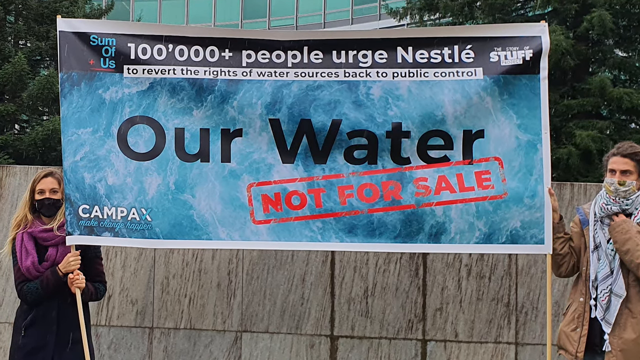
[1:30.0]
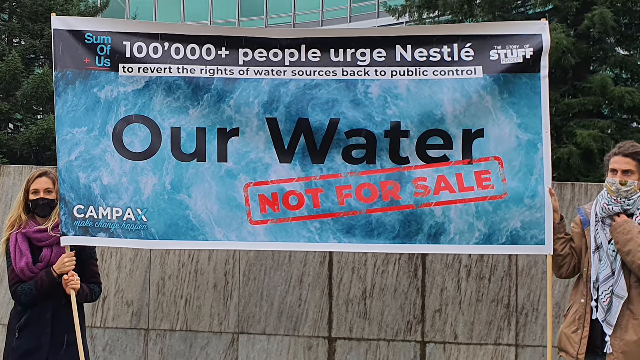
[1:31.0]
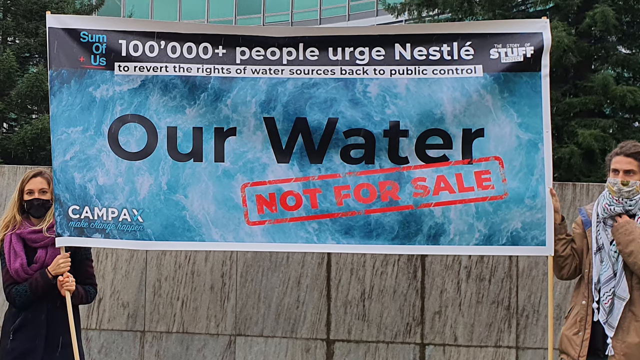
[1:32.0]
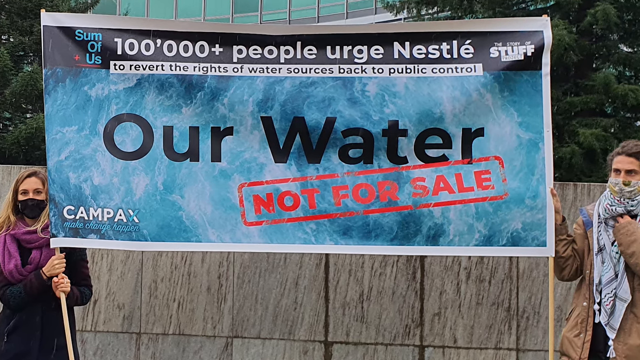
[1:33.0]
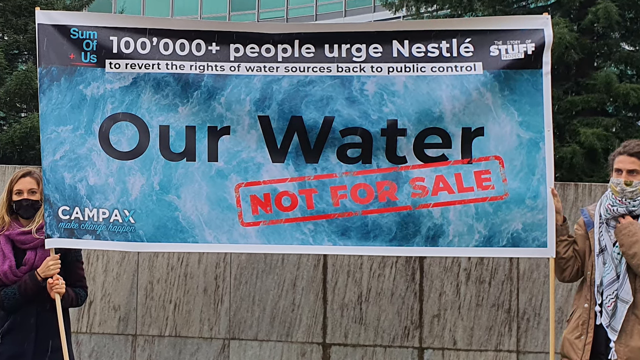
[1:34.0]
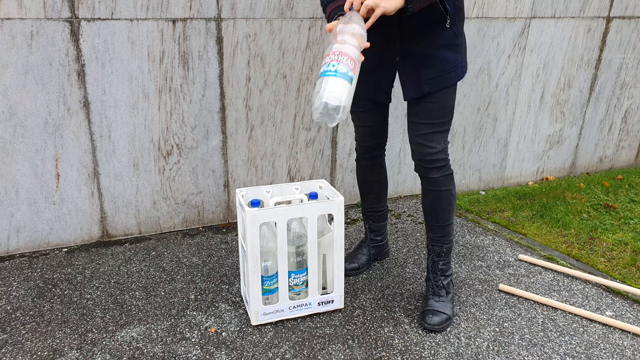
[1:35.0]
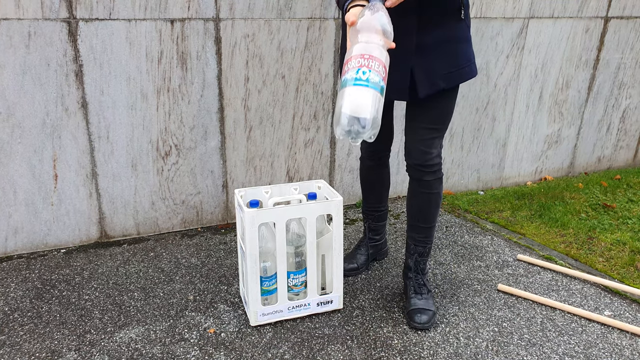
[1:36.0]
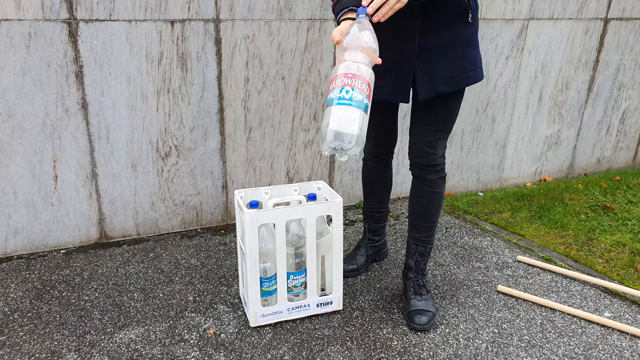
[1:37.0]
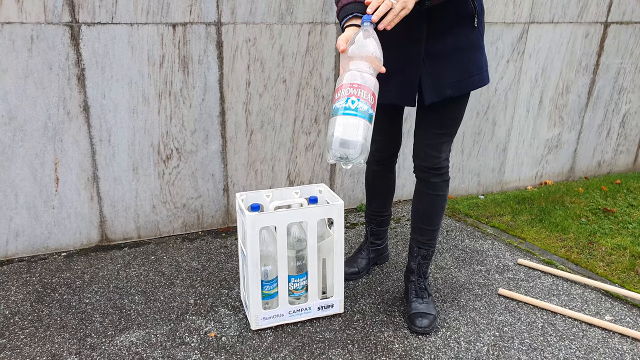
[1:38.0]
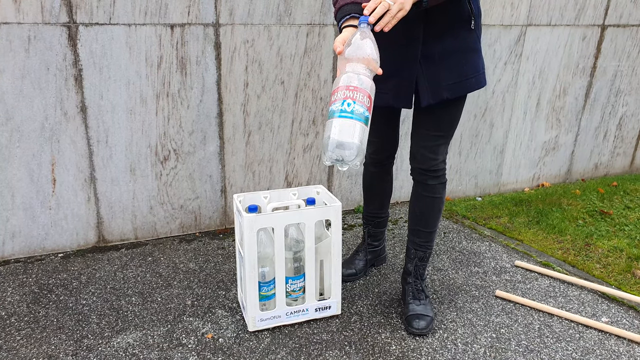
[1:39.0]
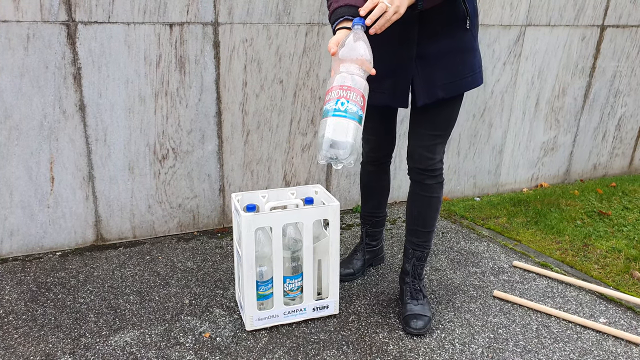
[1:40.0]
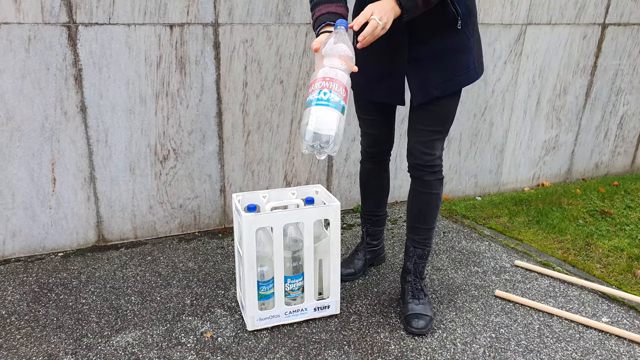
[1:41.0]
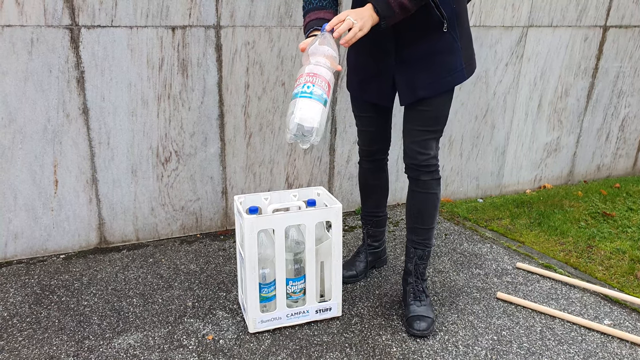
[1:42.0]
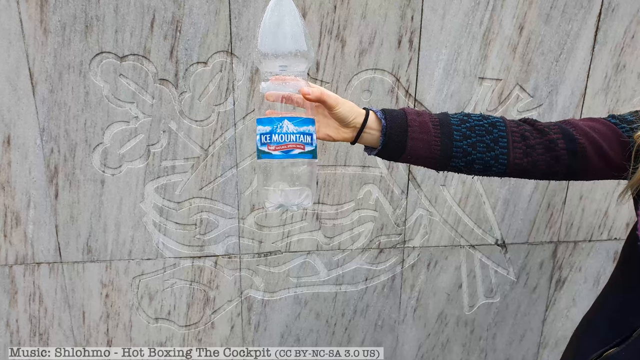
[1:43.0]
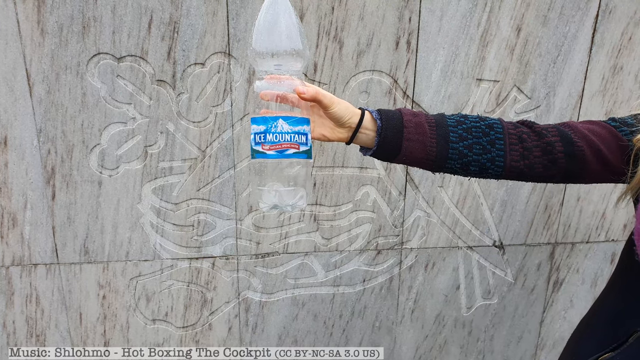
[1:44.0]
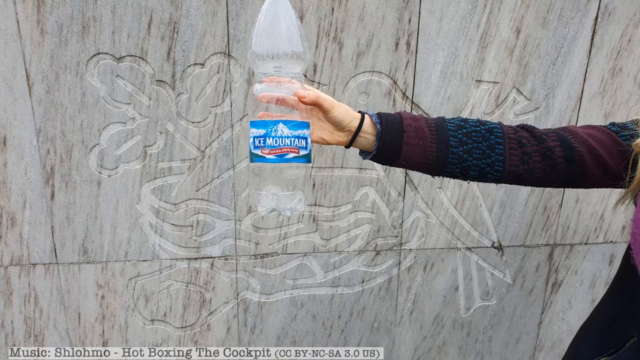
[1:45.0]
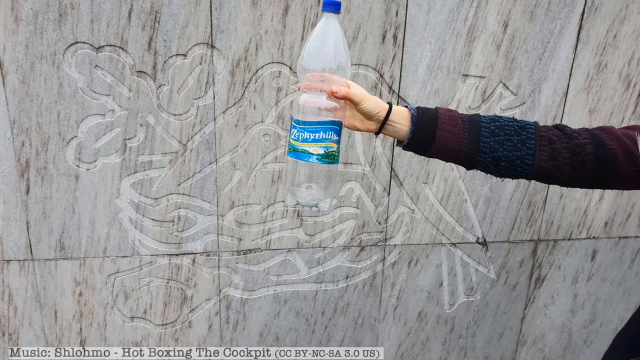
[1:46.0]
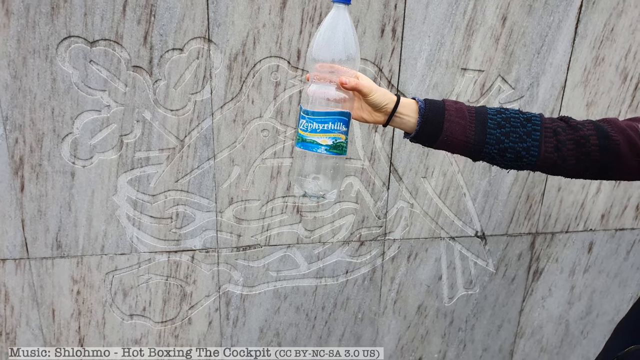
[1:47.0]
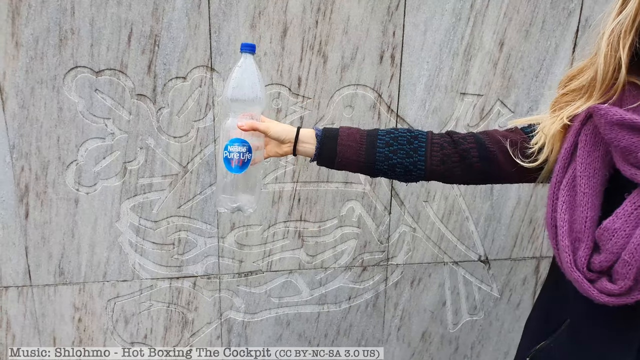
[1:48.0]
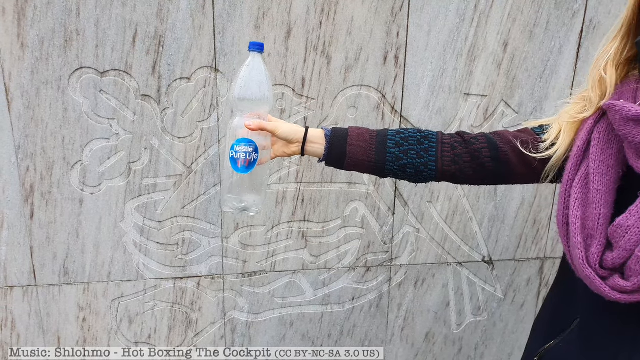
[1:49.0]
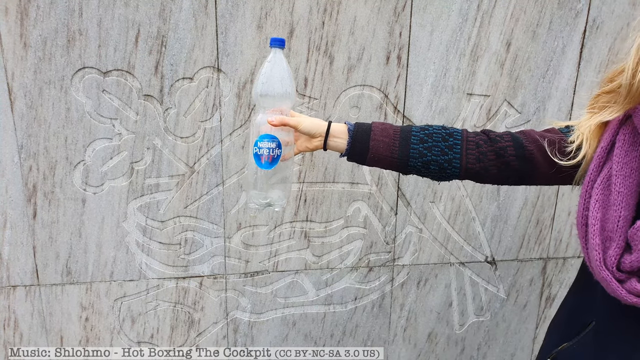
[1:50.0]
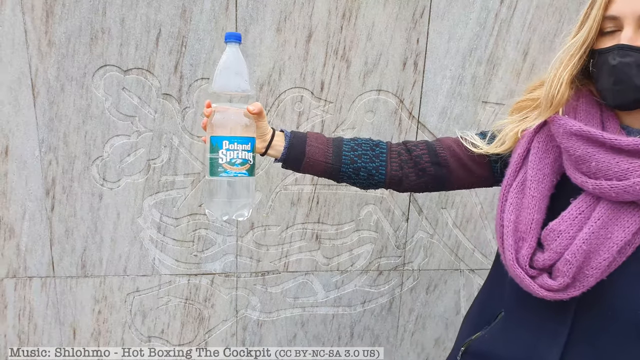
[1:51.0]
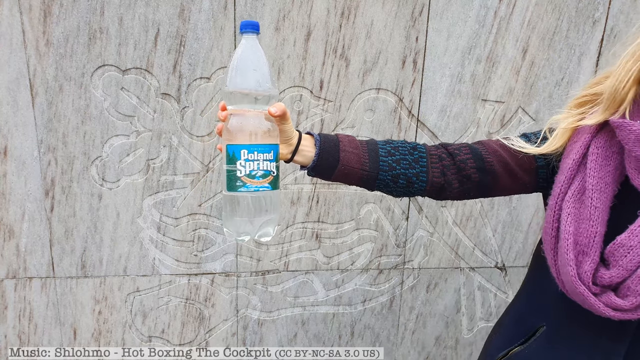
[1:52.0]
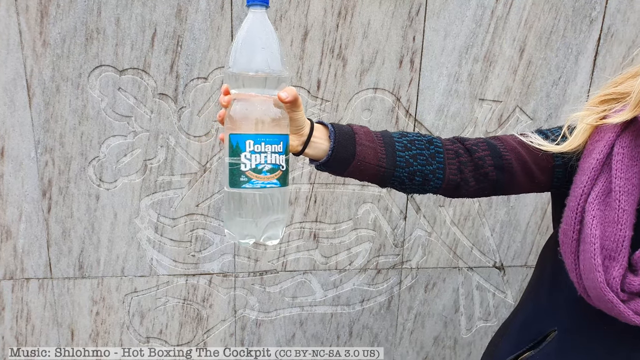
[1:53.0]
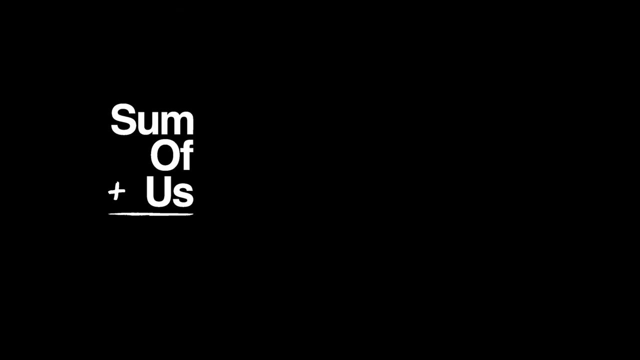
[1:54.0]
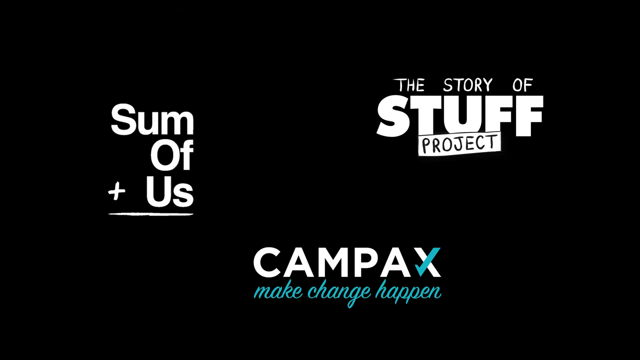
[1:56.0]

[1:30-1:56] The two people are still holding the sign in front of the wall. The wall is not very tall: it reaches the top of the head of the person on the left, and only maybe the neck of the person on the right. The protest sign says "our water is not for sale" and states that over 100,000 people want Nestle to give the rights of the water sources back to the public. The view slowly moves in, and then different water bottles are shown, with the names Some of Us, Campax, something that says Stuff, and Arrowhead. Someone holds a bottle up. Ice Mountain, Zephyr Hill, Pure Life and Portland Springs appear, followed by Some of Us and the Story of Stuff Project. It appears to be both a protest and an advertisement.